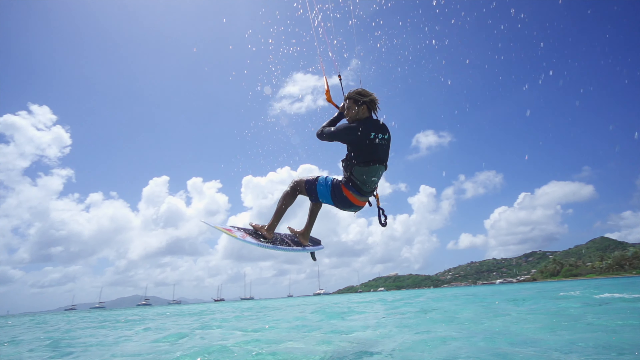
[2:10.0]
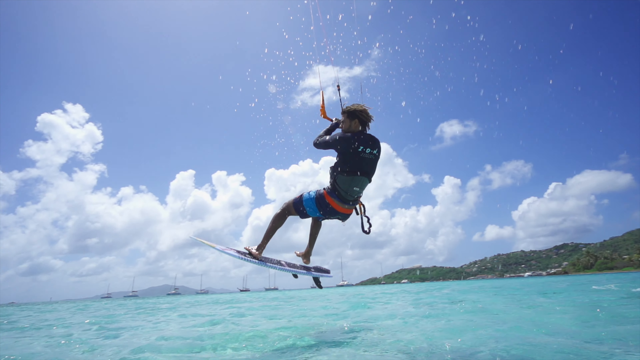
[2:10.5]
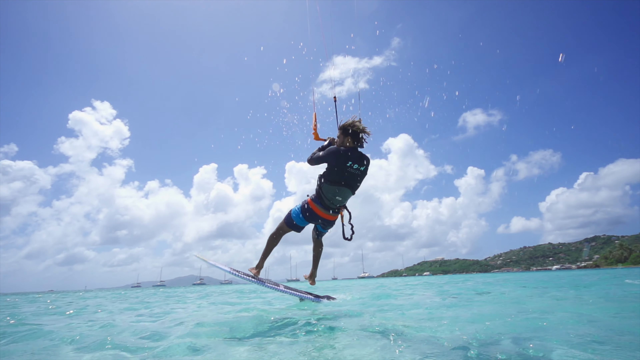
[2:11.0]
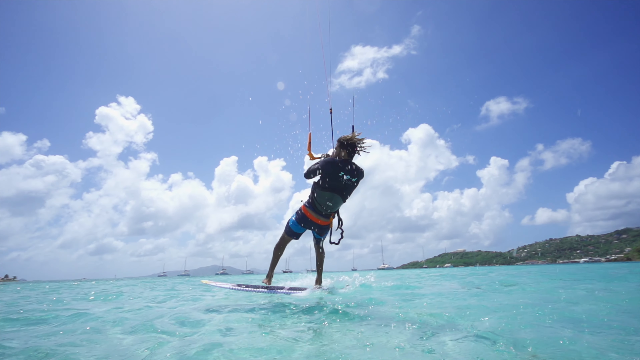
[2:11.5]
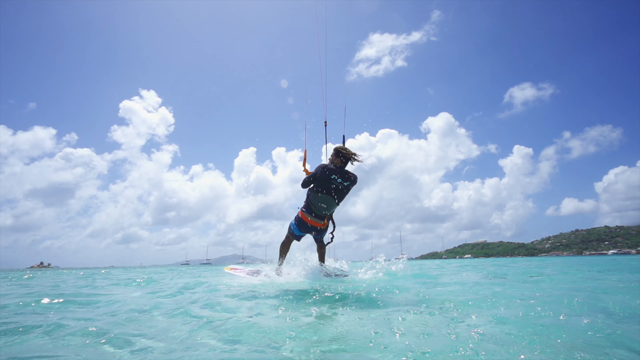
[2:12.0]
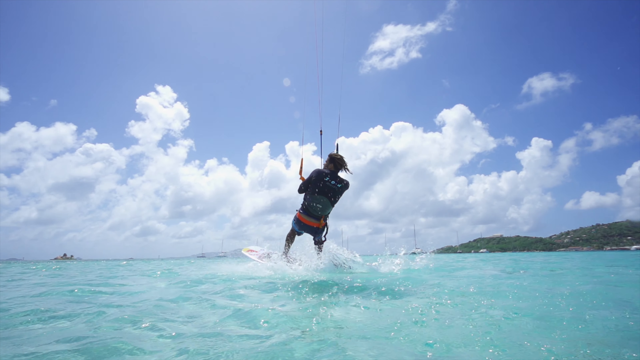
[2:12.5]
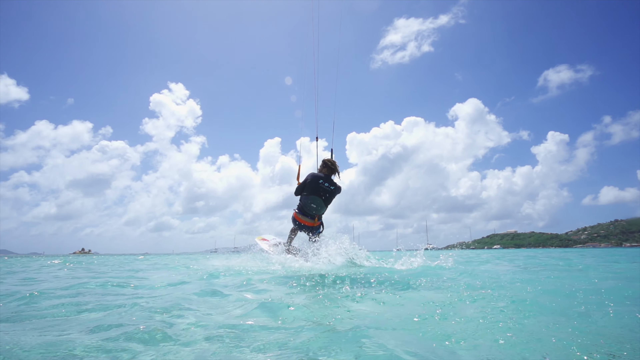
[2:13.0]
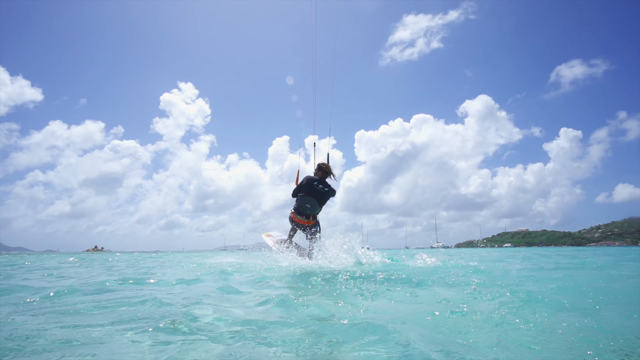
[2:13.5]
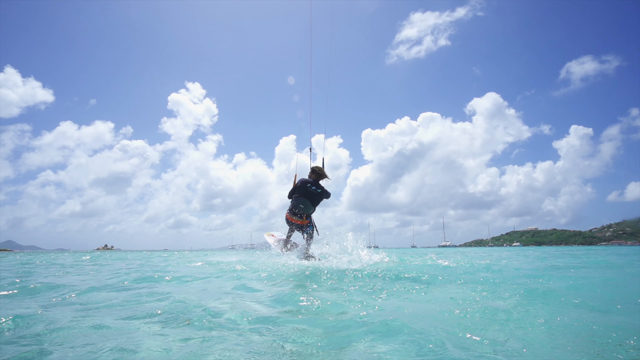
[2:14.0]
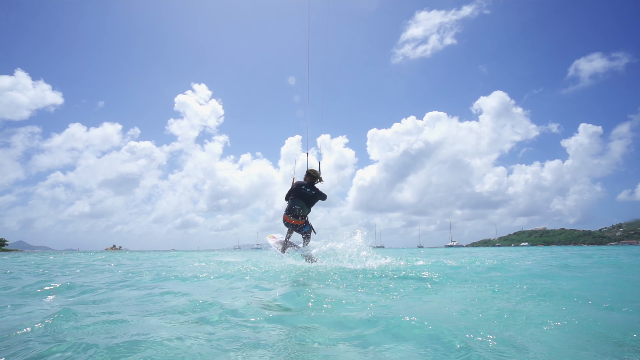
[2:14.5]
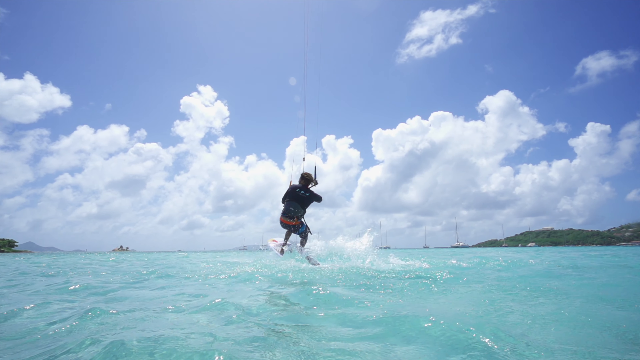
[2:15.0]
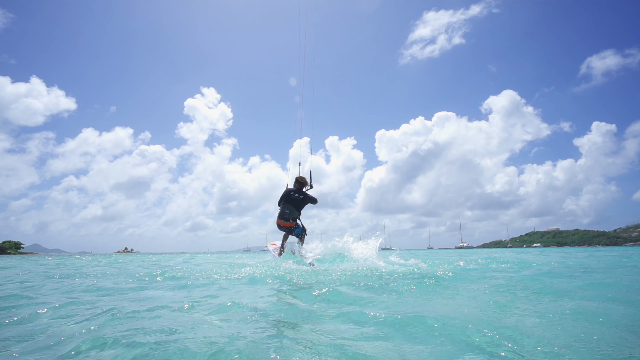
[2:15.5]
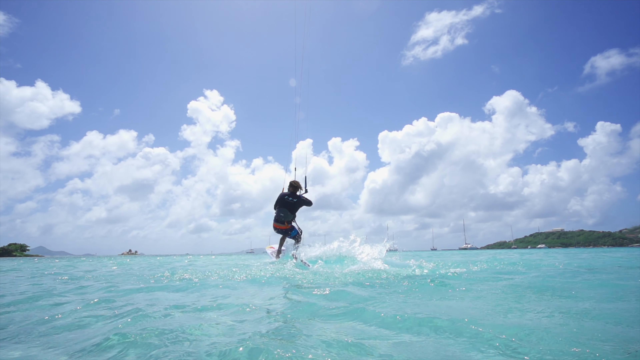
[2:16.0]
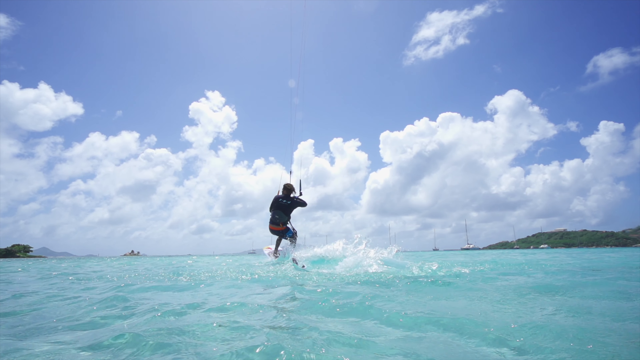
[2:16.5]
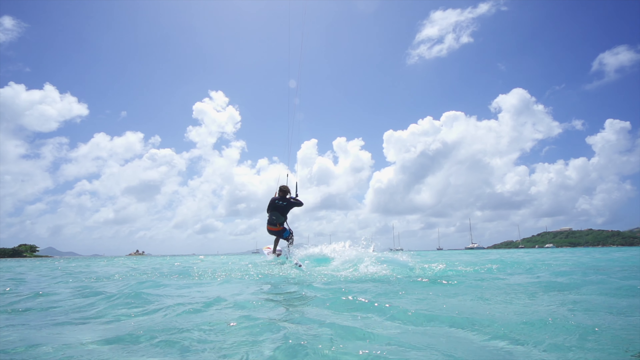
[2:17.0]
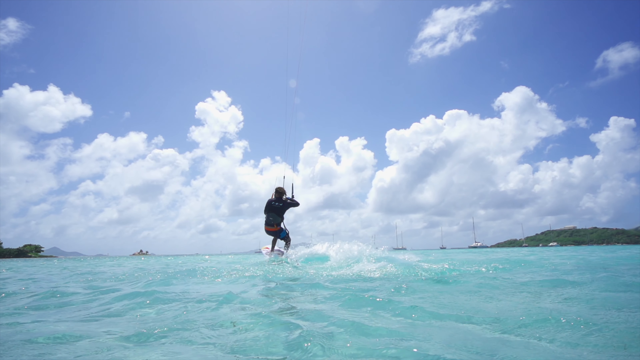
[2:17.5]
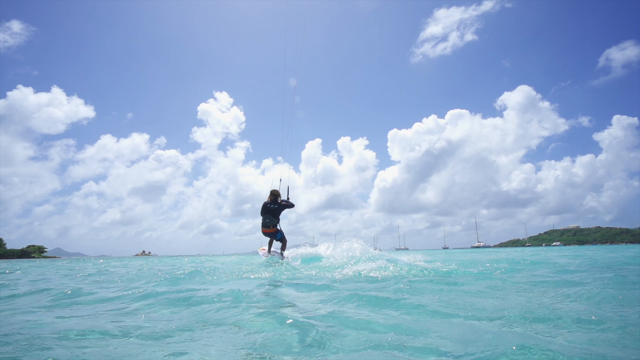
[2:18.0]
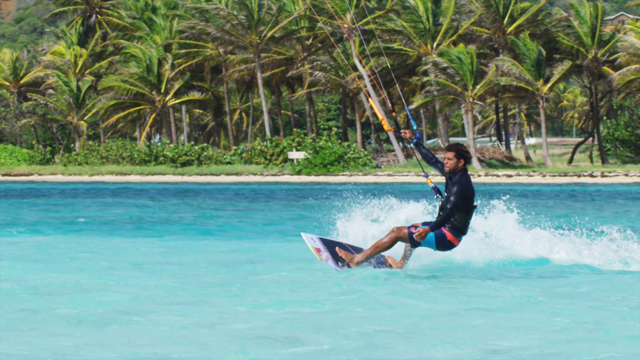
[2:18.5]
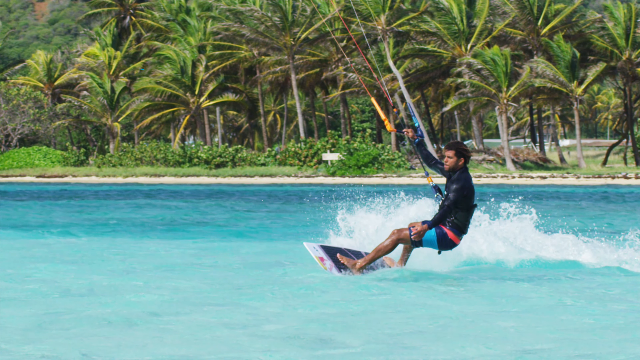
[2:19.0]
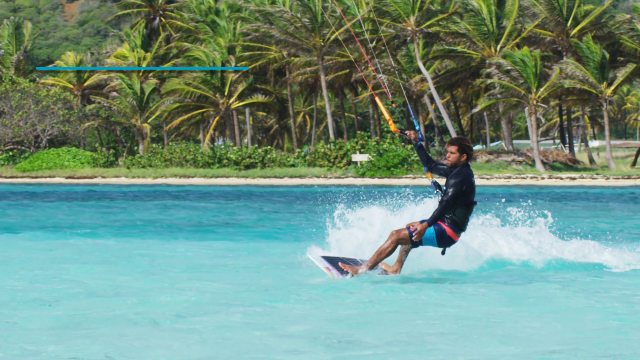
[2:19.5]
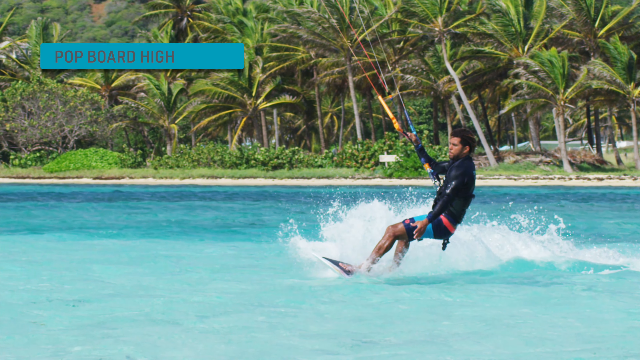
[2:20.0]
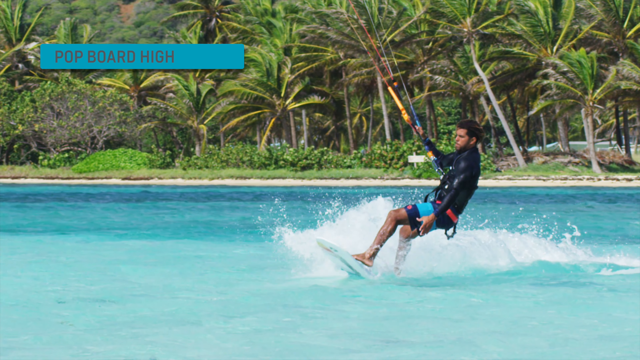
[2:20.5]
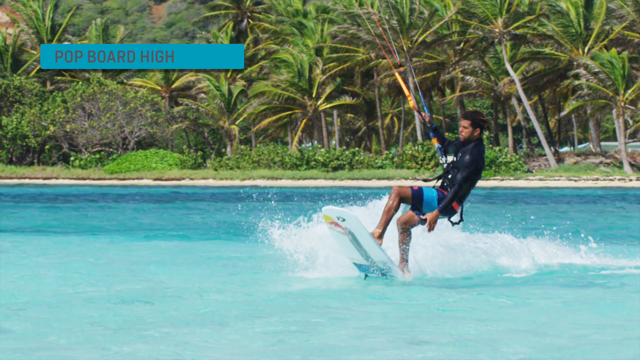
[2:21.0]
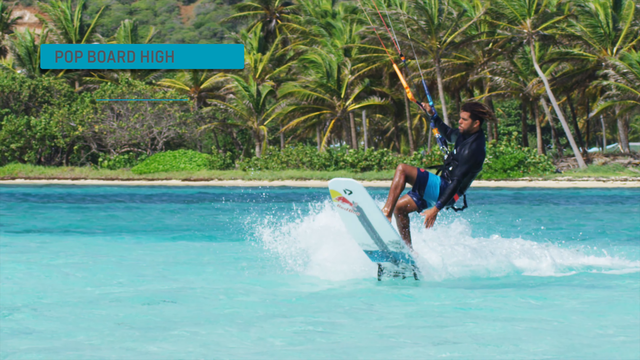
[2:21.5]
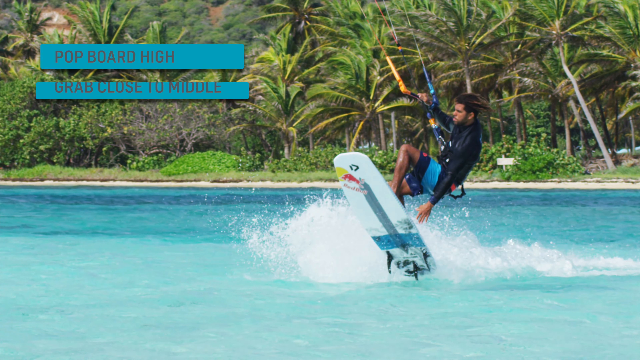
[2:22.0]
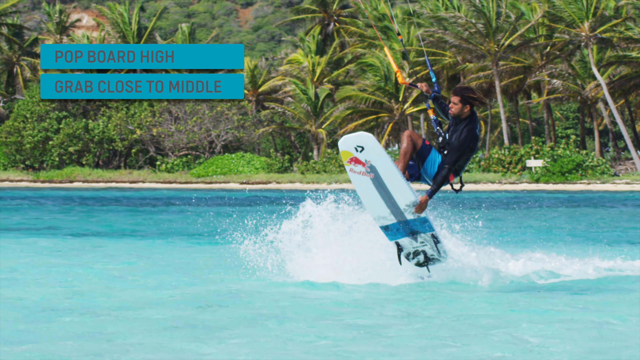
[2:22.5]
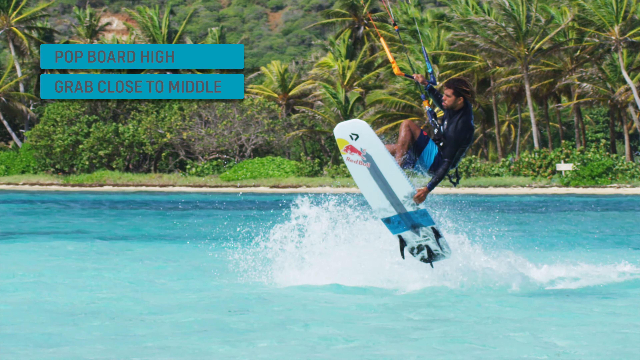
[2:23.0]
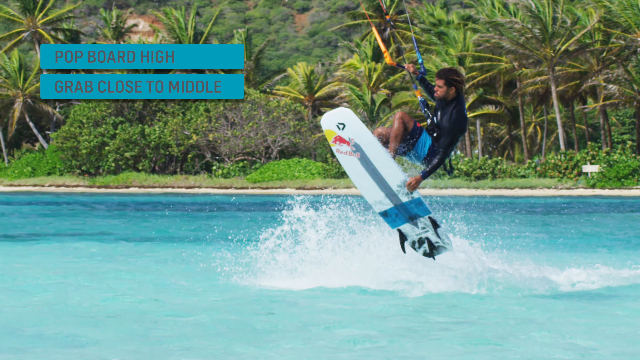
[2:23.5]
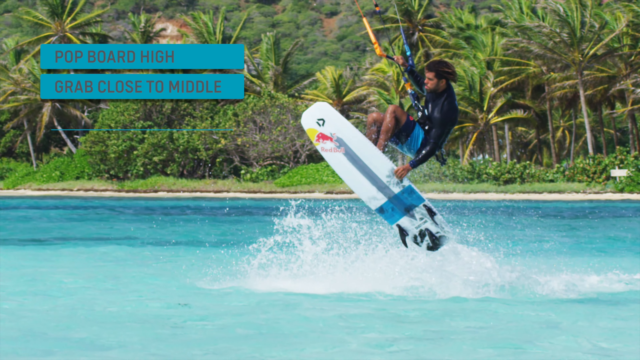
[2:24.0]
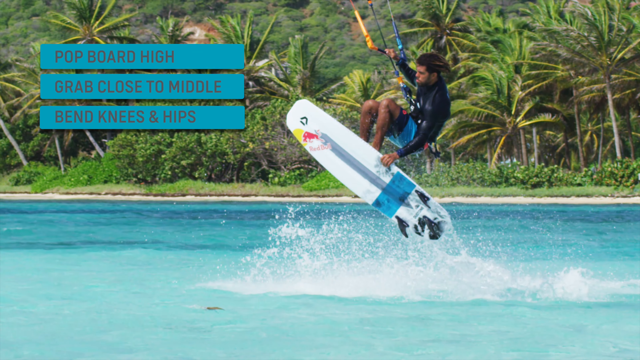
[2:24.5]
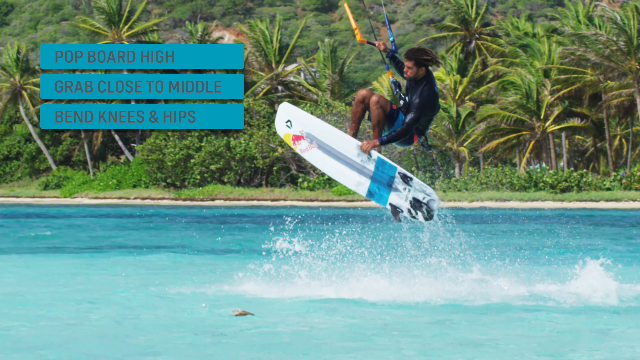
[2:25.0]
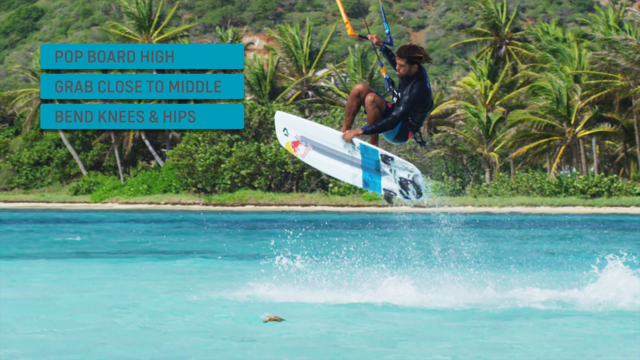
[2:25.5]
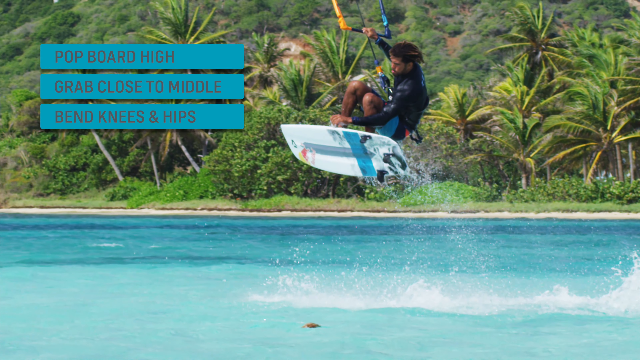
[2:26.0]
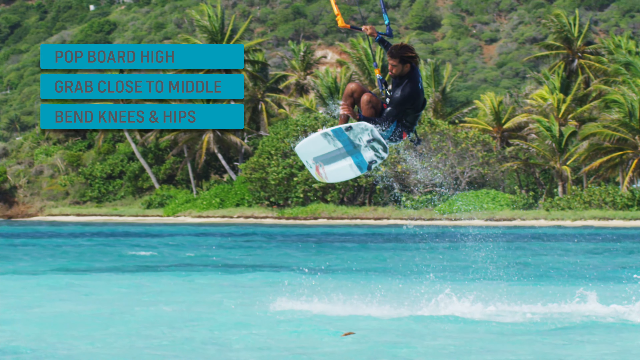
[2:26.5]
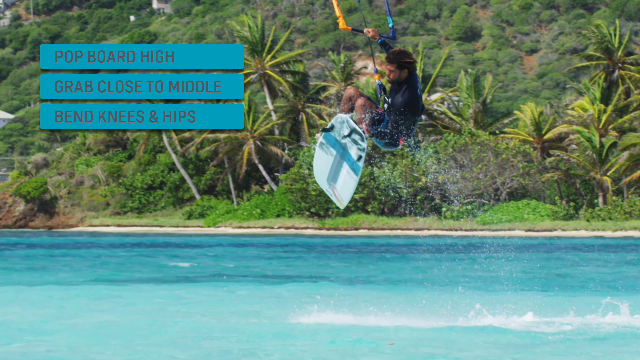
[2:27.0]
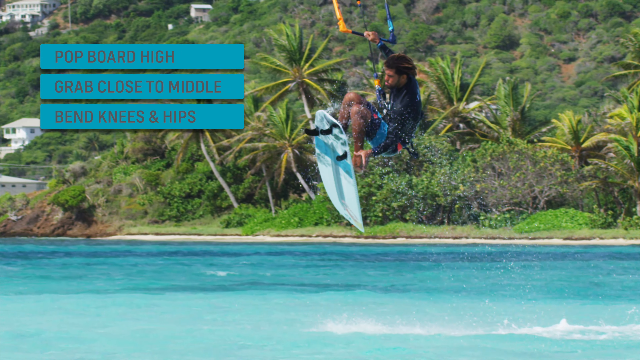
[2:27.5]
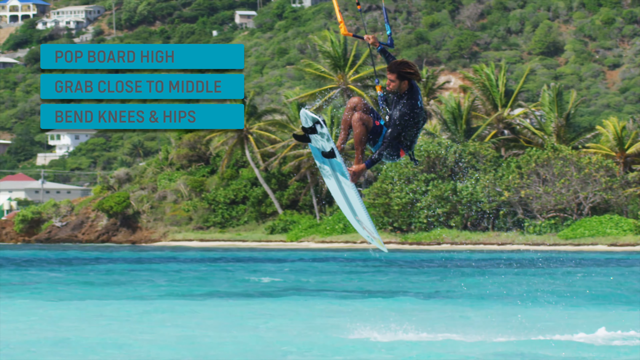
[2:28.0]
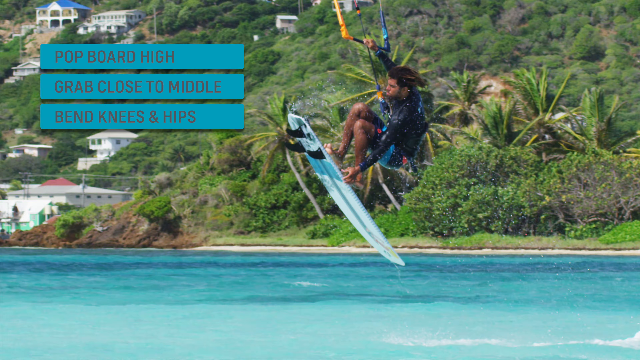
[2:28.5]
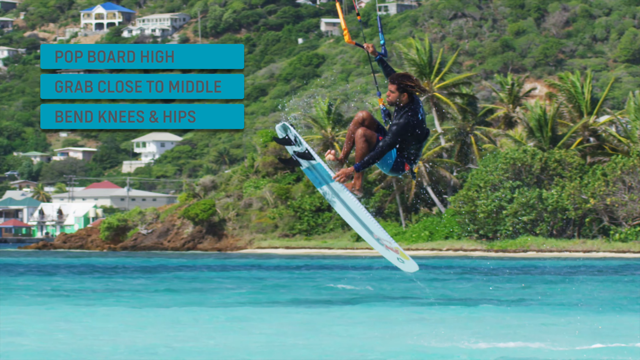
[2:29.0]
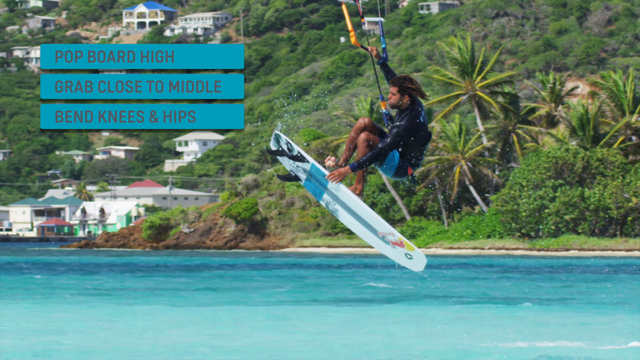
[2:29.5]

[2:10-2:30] The man has his feet sideways on the board while the board is in the air, and it lands in the water with his feet on it. Both of his hands are on a bar attached to cables connected to a parachute. The scene changes to a closer view of the rider, who now has one hand on the bar and one at his side. In a blue border, the words "pop board, high" pop up on the screen. Water splashes behind the board. As the board comes up out of the water, the man grabs it with one hand, and the words "grab close to middle" pop up. He turns the board completely around in a circular motion, and then on the blue background the next words appear: "bend knees and hips."